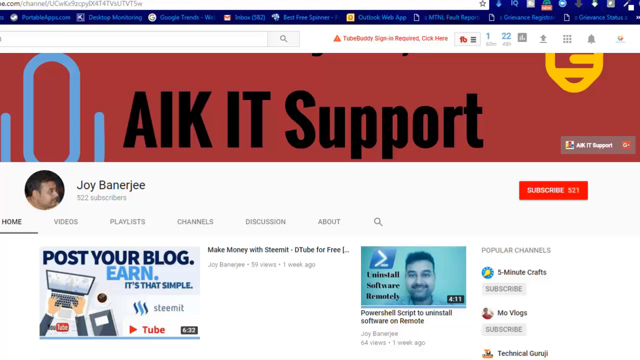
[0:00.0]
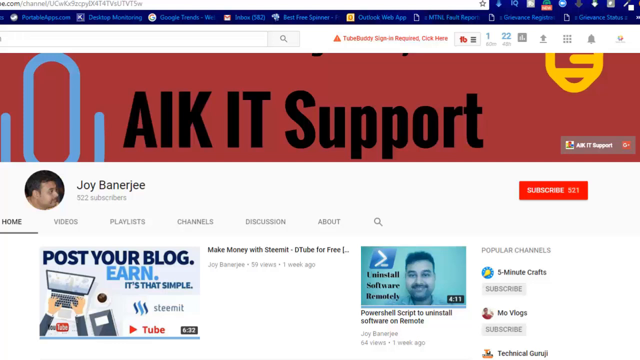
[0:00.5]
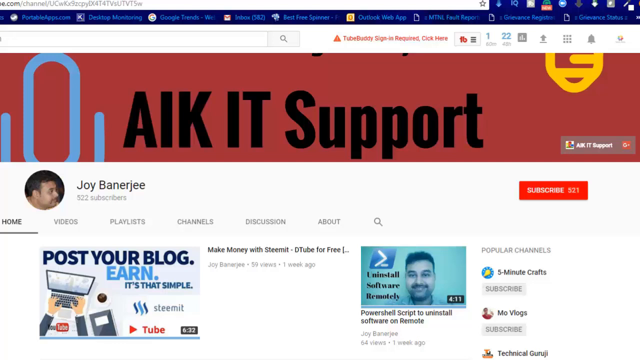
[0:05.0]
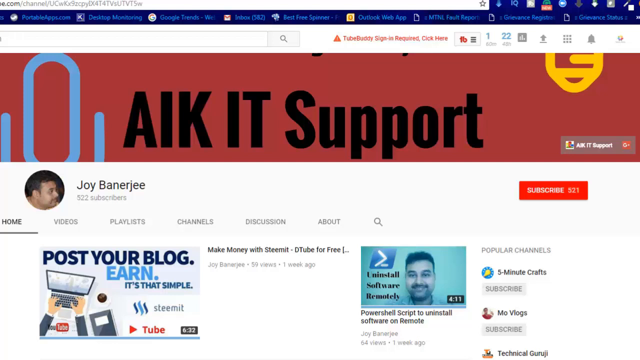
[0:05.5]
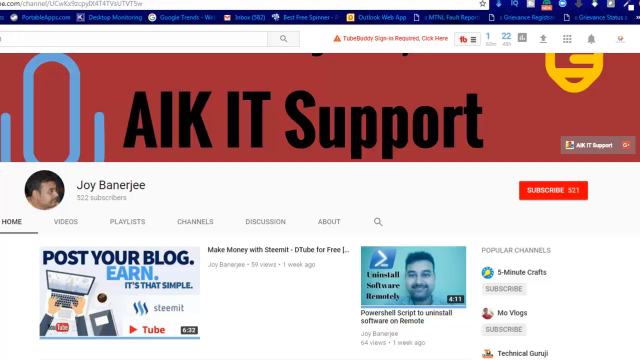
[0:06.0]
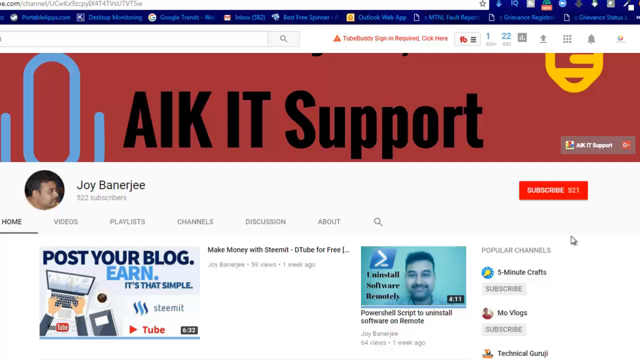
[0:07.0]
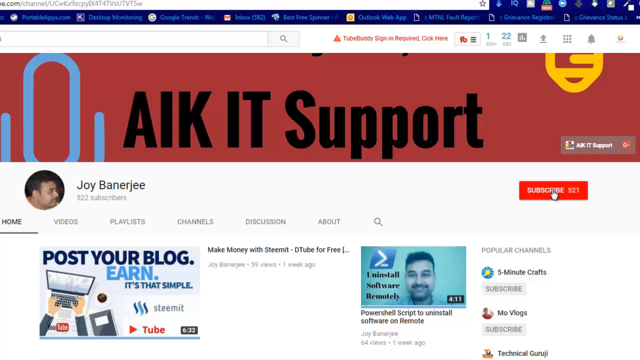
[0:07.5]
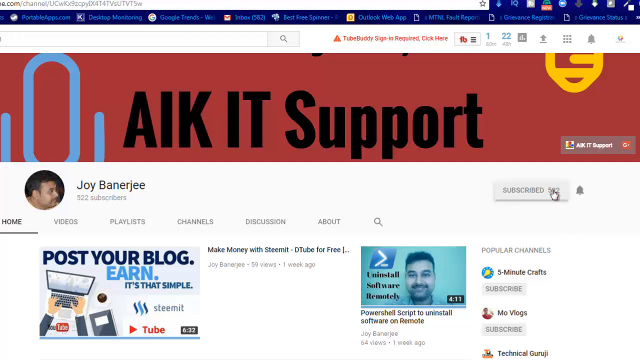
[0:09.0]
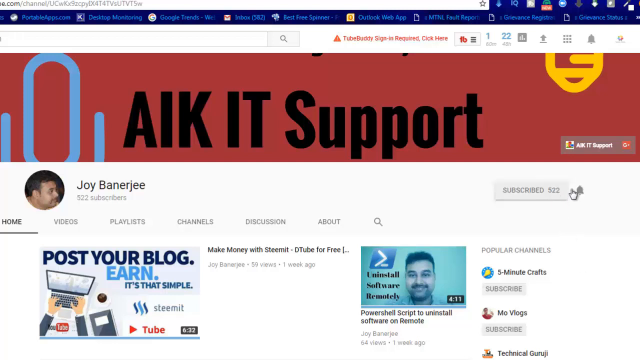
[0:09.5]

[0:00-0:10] The video shows a YouTube page for "AIK IT support," apparently a YouTube user's personal page. A mouse pointer moves around the page, starting over on the right. It scrolls up in the right part of the page and clicks the red subscribe button, which then turns a white or grayish color.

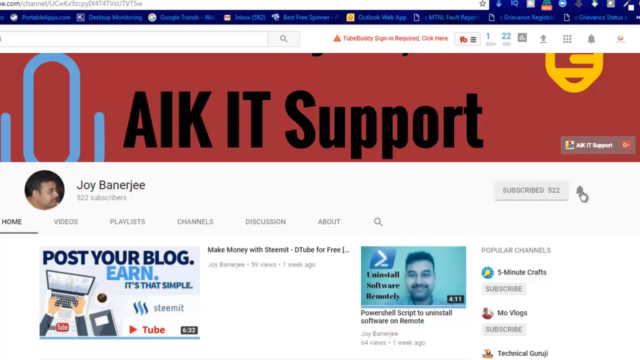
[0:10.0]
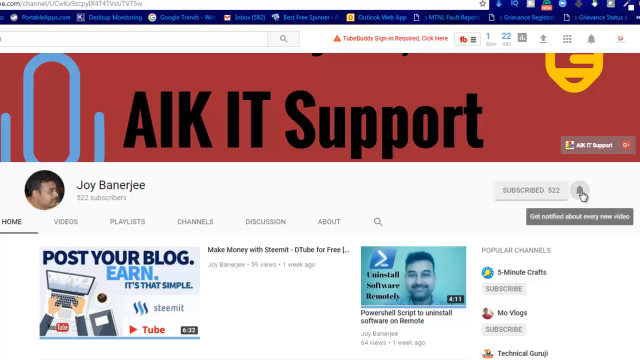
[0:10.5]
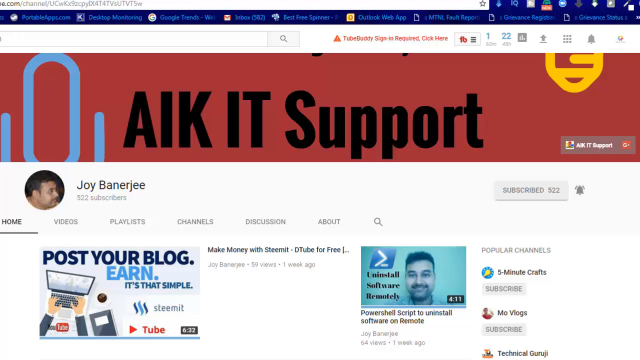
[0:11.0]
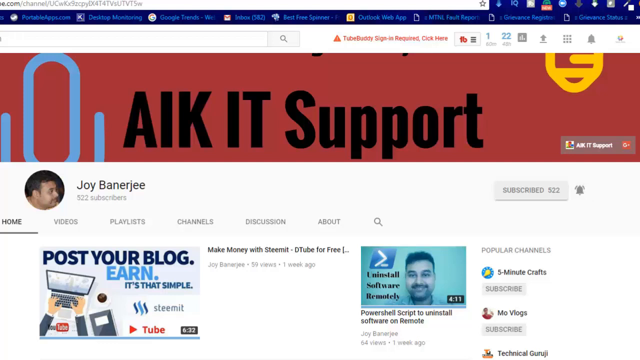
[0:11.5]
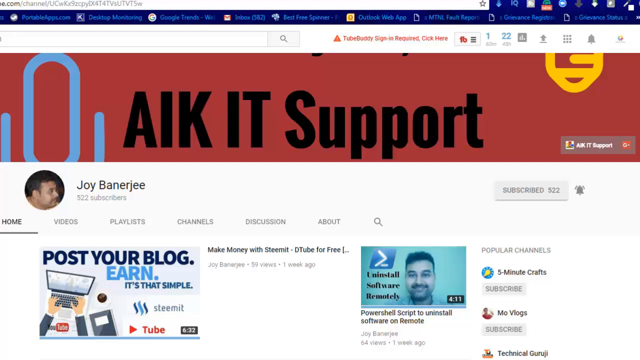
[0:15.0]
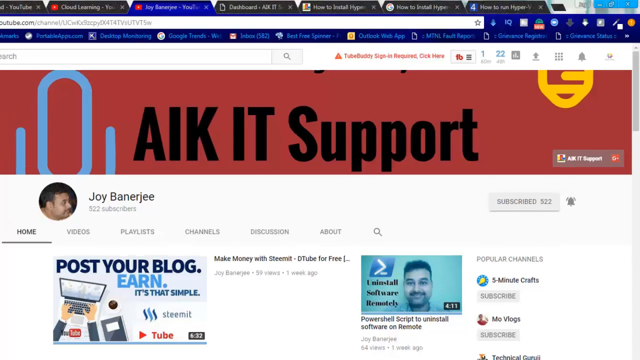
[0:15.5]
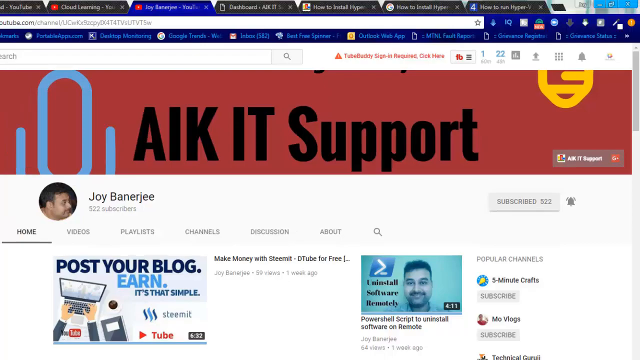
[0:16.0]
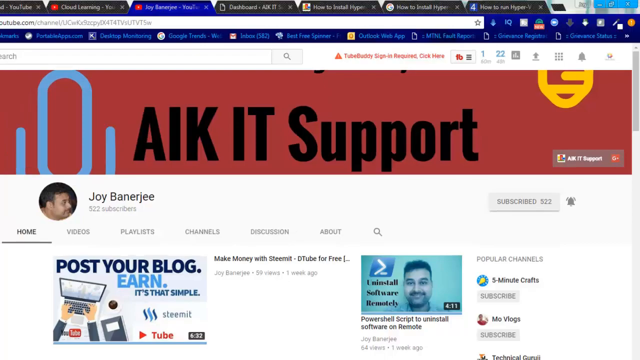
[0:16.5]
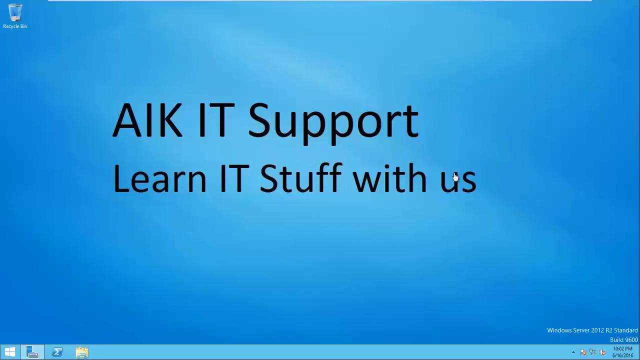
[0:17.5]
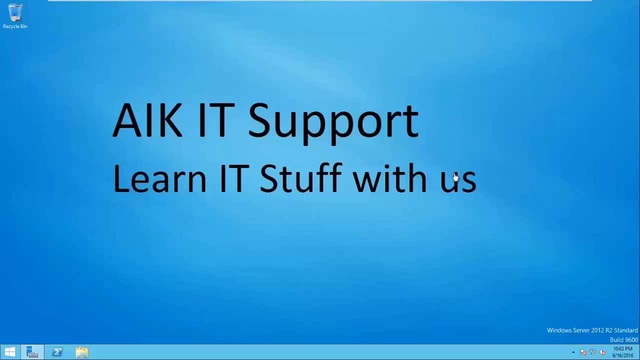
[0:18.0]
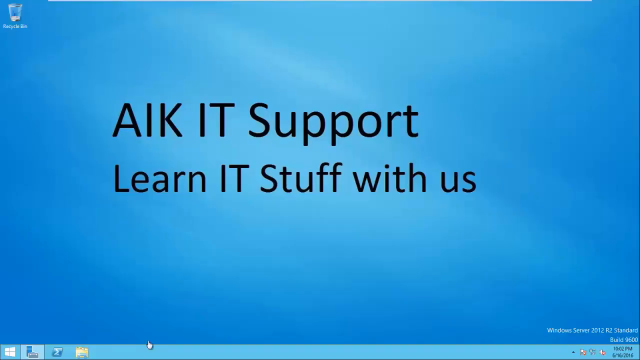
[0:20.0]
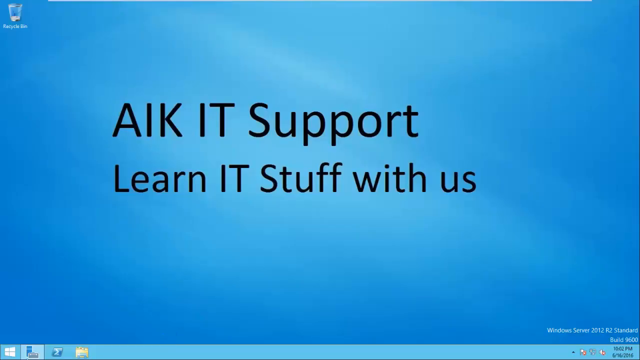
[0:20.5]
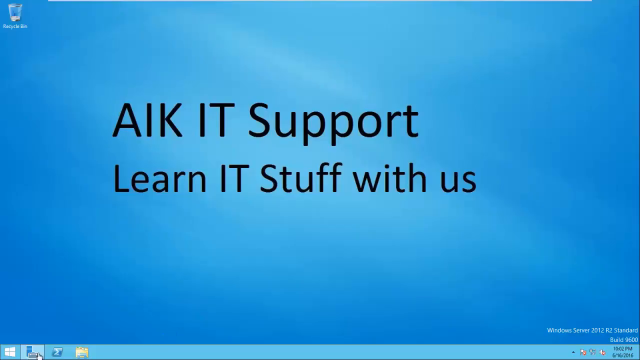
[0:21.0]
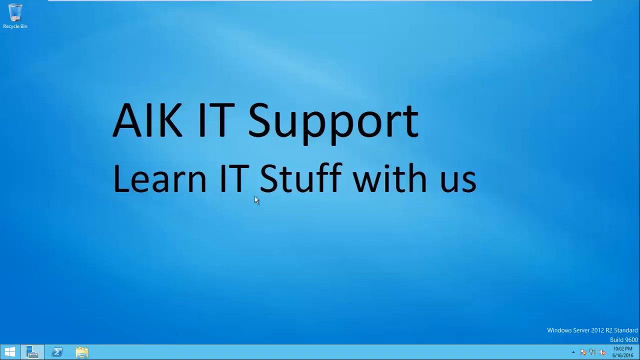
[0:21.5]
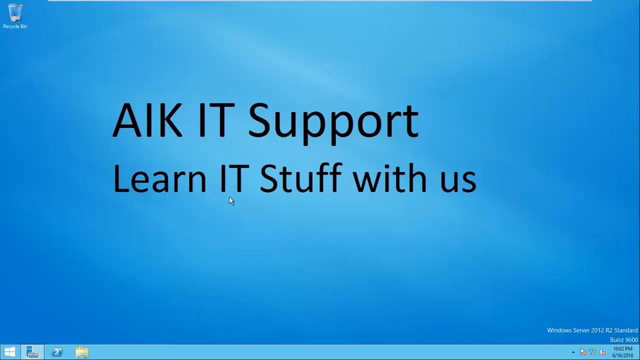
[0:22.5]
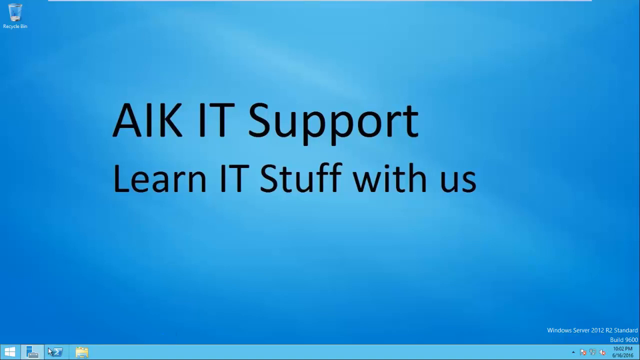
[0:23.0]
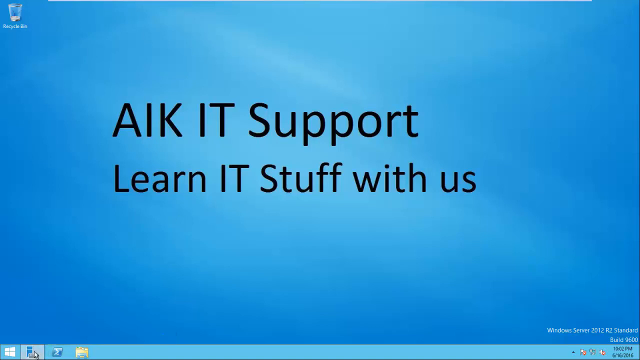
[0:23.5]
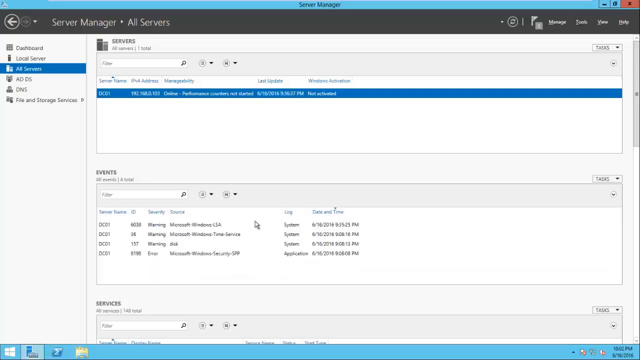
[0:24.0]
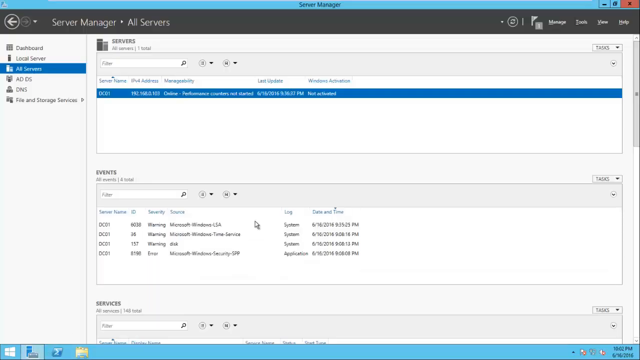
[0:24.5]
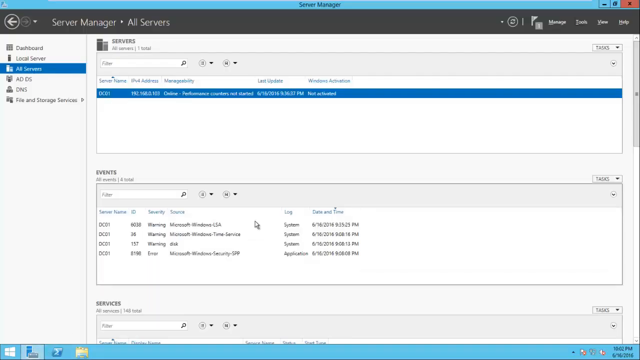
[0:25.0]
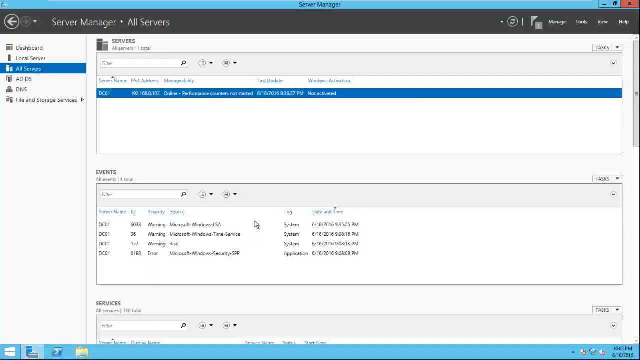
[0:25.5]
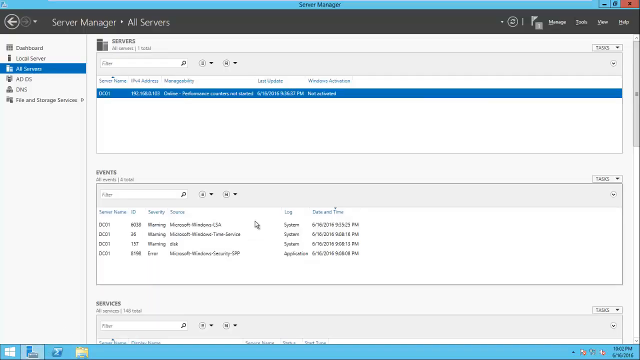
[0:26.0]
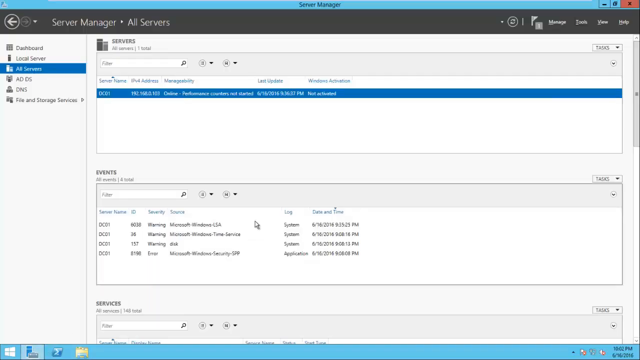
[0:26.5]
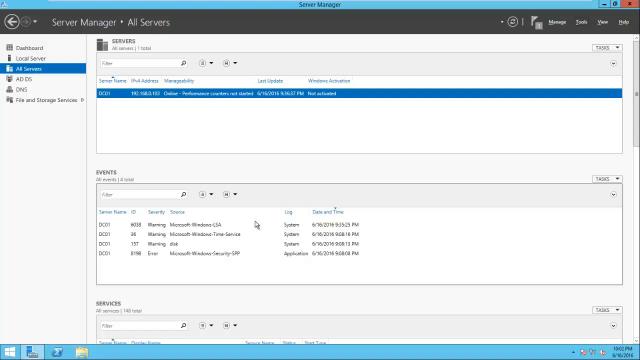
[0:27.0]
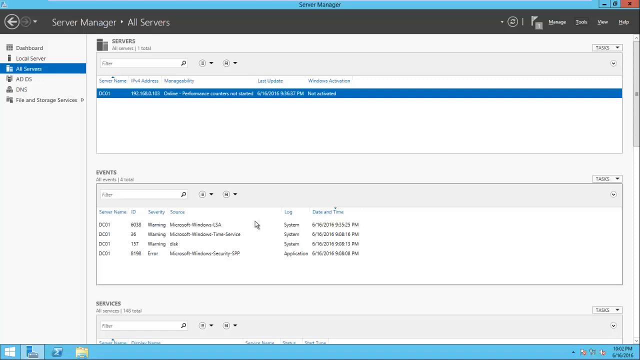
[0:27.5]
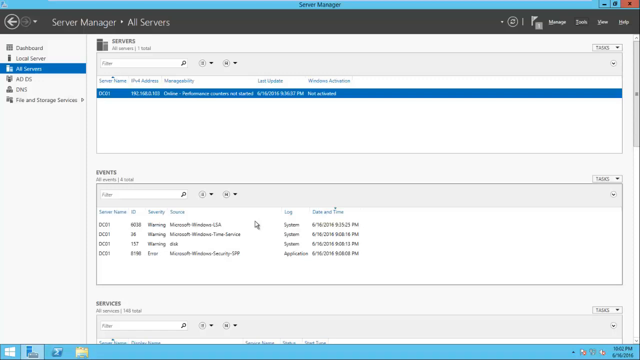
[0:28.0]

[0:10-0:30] The mouse pointer is in the right corner of the YouTube page and clicks the bell icon. The bell icon does not change color, and the pointer then moves off the screen toward the lower right. A different page appears with a blue background and the text "AIK IT support. Learn IT stuff with us." The view then changes to what appears to be a website. At the top left it says "server manager, all servers." On the left side is a menu listing dashboard, local server, all servers, AD, DS, DNS, and file and storage services, with all servers highlighted. There are several options on the right side, and the highlighted option, in blue, is in the middle of the page.